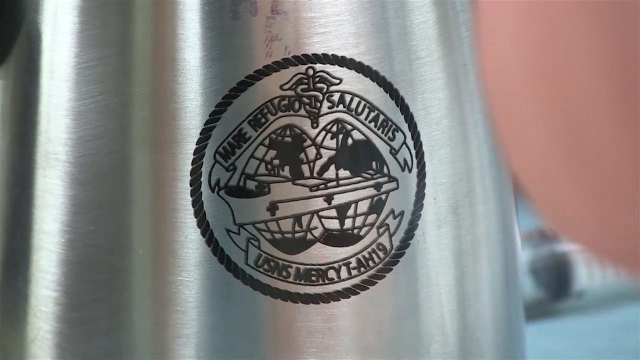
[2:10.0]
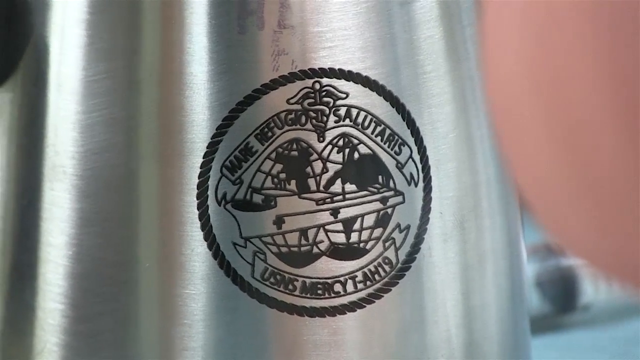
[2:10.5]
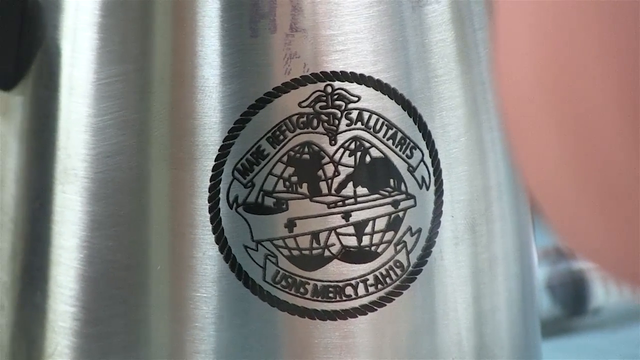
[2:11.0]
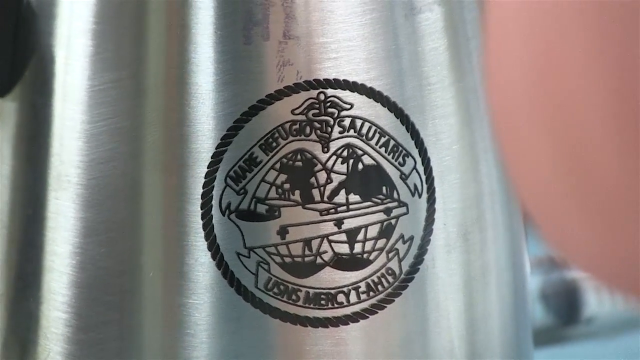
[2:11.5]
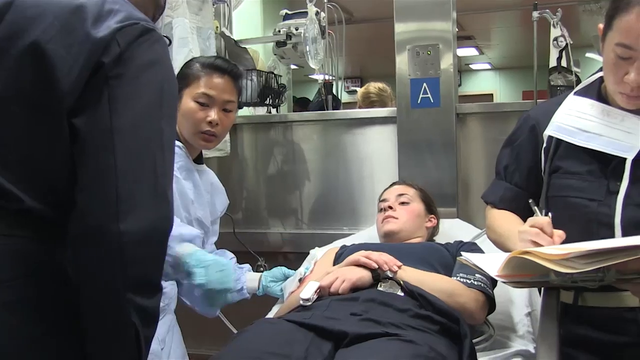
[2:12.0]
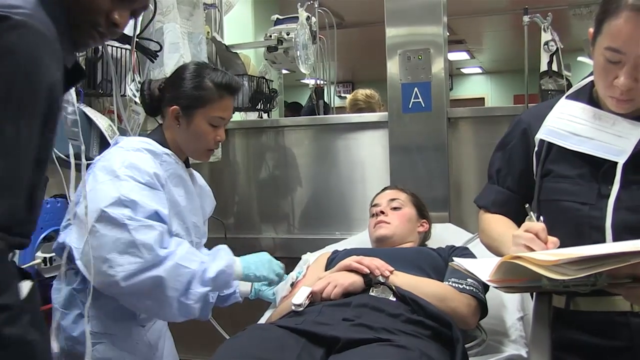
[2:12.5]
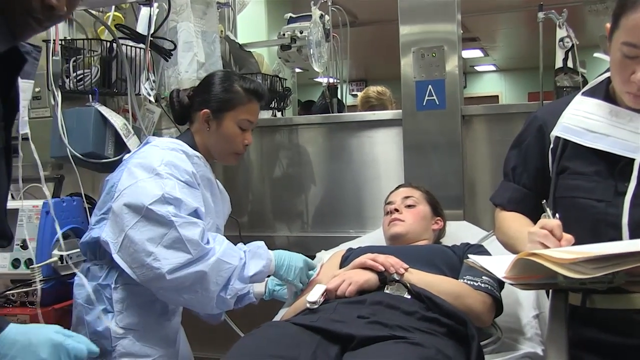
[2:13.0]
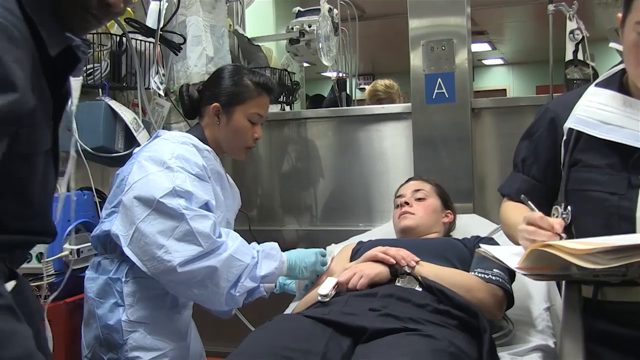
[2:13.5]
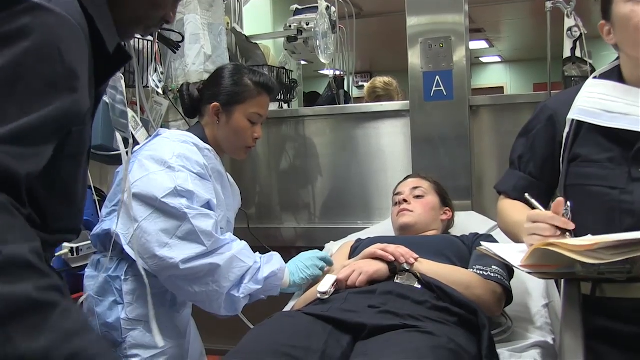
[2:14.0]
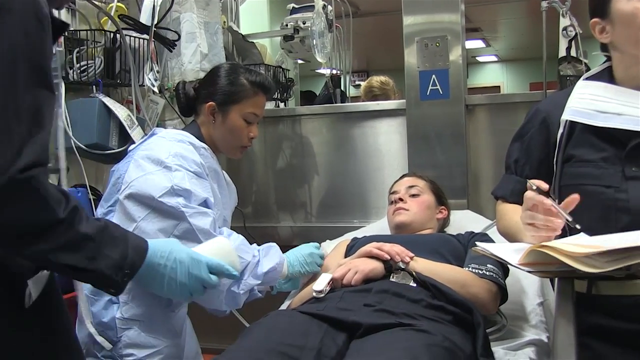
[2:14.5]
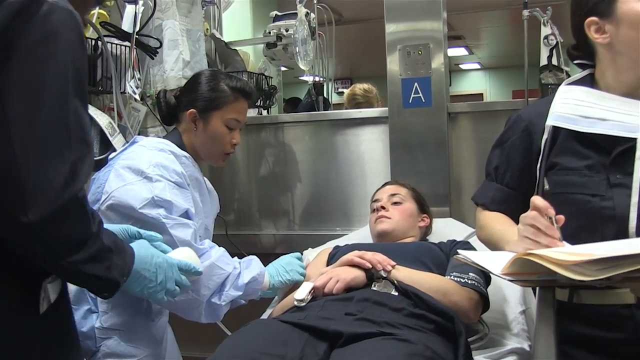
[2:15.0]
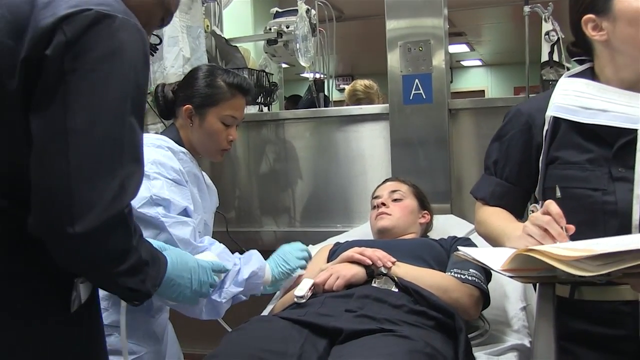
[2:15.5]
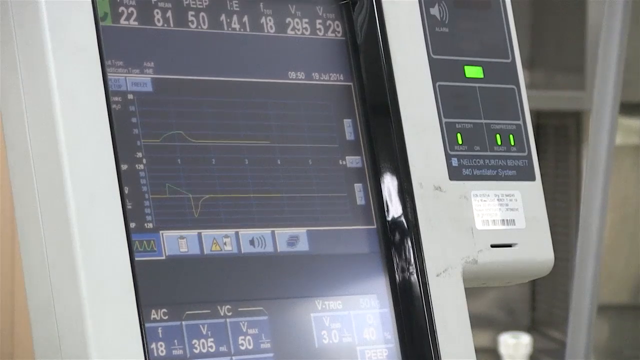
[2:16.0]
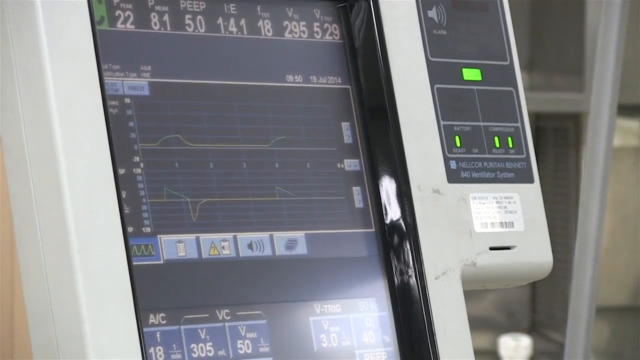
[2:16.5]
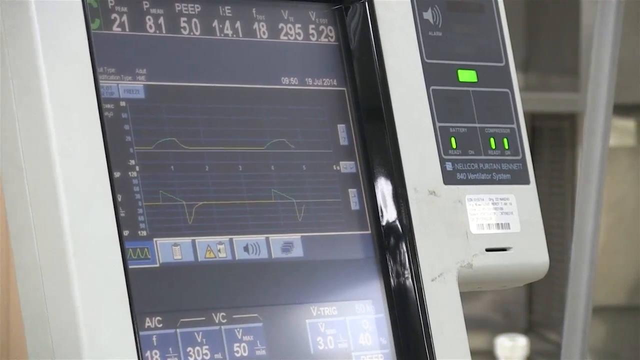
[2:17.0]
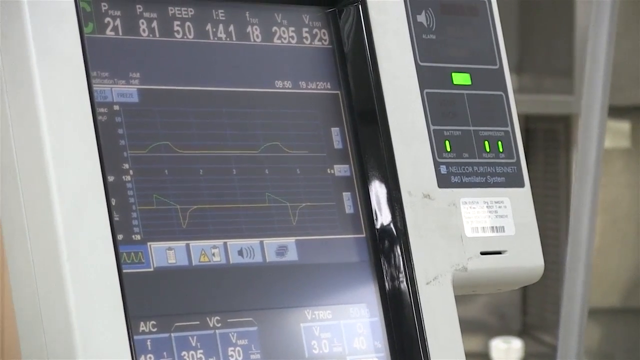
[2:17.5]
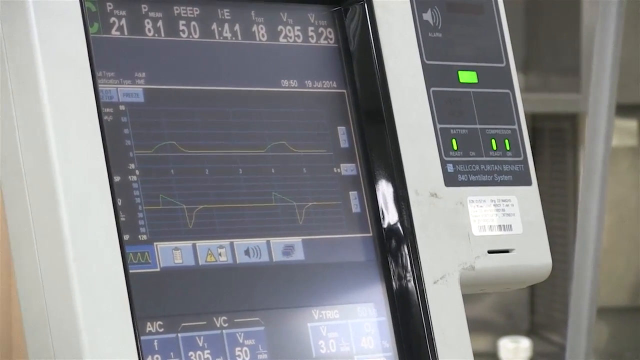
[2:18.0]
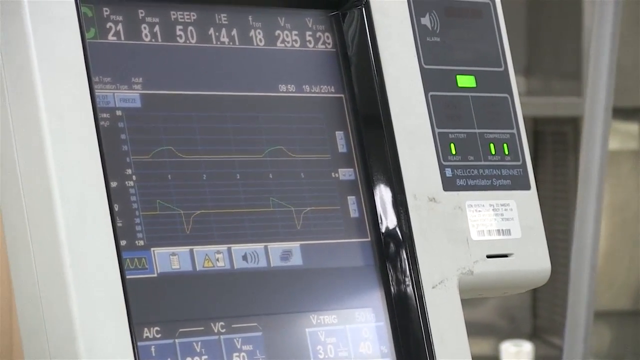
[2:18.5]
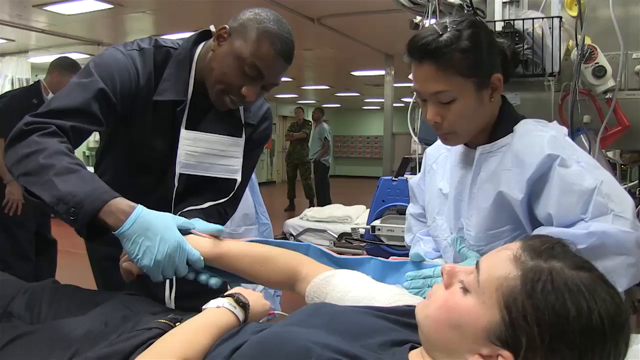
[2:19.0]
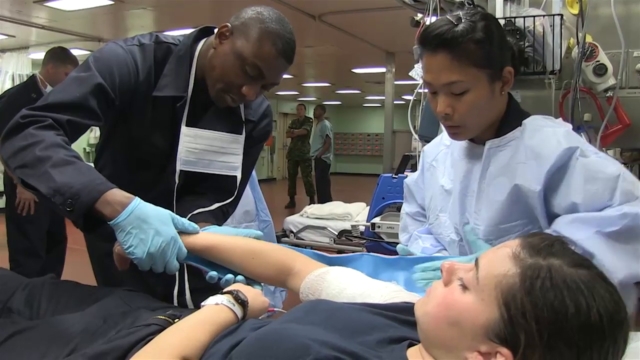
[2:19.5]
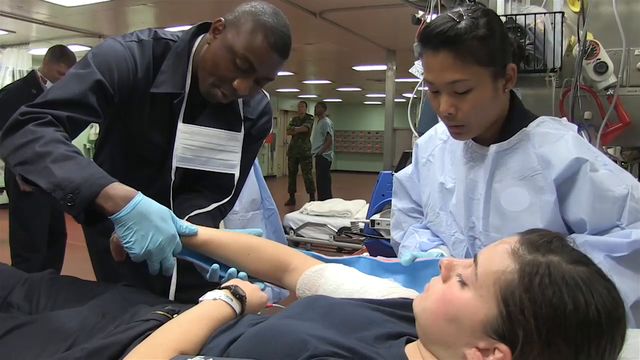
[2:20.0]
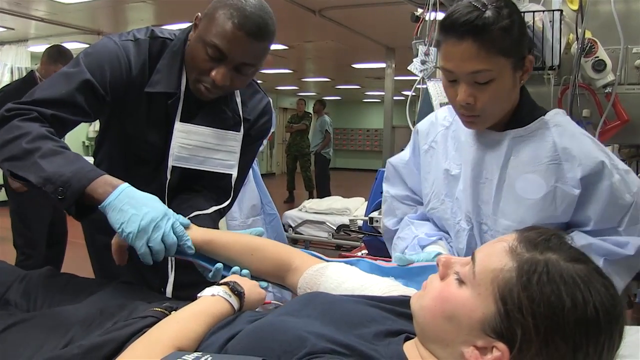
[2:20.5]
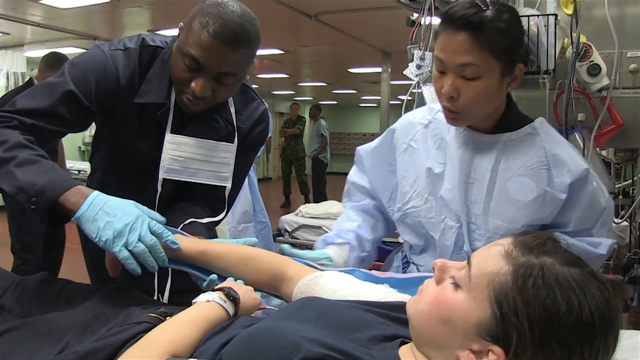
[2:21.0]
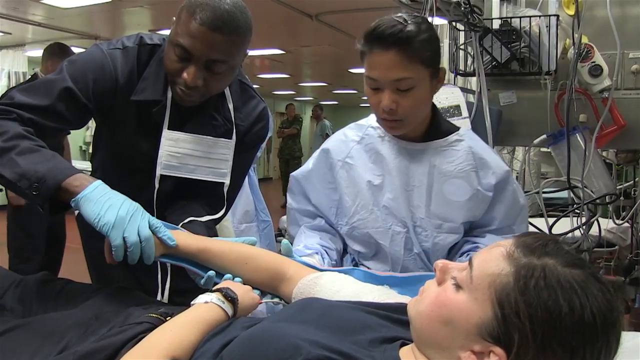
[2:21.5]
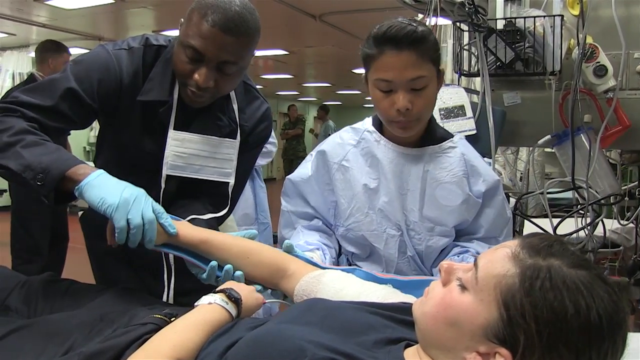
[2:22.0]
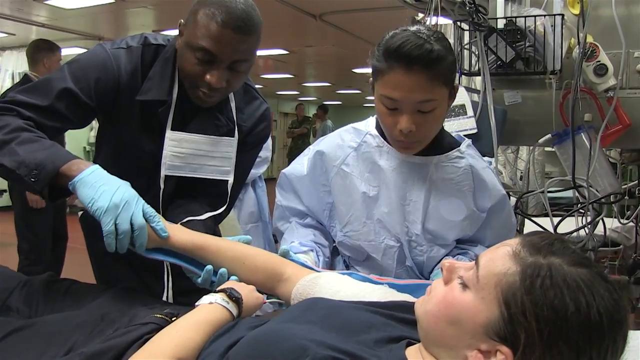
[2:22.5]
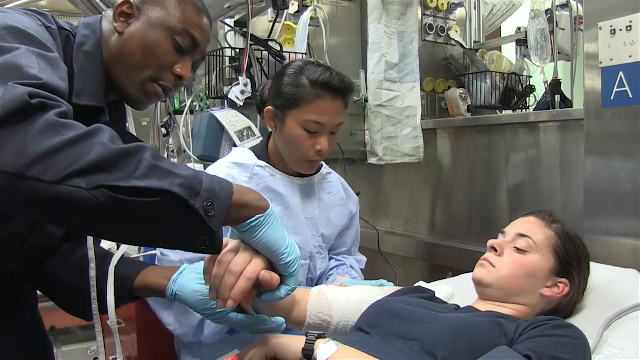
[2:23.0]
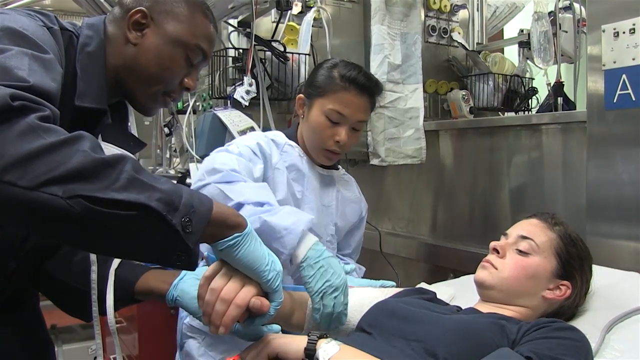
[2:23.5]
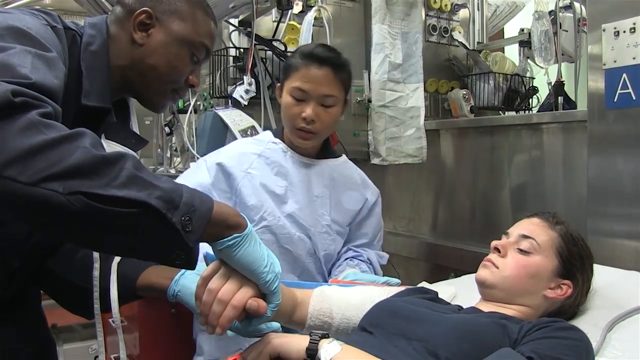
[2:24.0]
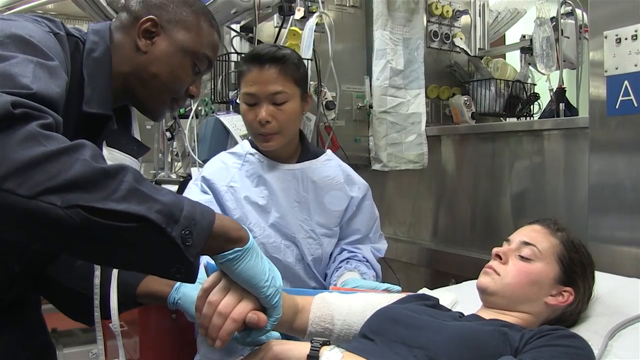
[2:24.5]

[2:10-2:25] Some kind of medical badge appears; it has a medical symbol on it, and underneath it says "USNS Mercy, T-AH19". Then the young woman seen earlier at the computer examines the arm of a patient and looks like she is possibly trying to put it into some sort of cast. A machine of unclear purpose is hooked up to the patient. Two other people help work on the patient, including the respiratory therapist. She wears scrubs and latex gloves but no mask, while the other medical personnel have masks hanging around their necks rather than on their faces.